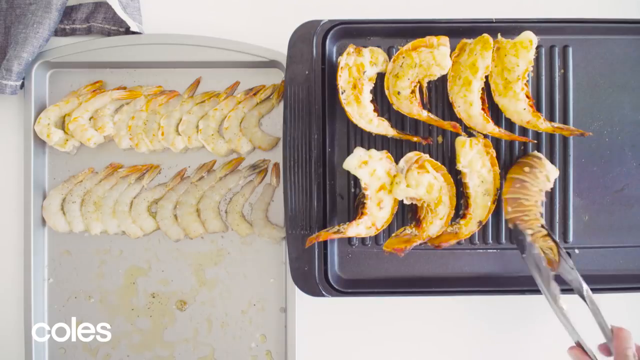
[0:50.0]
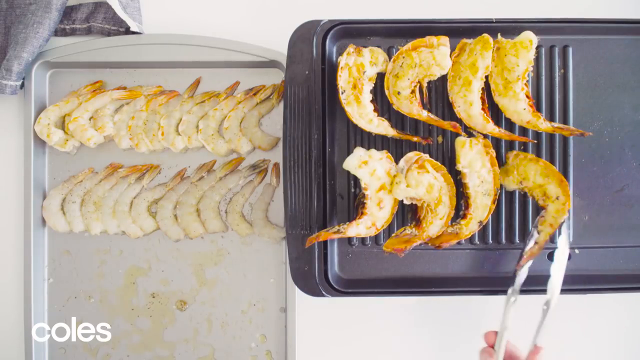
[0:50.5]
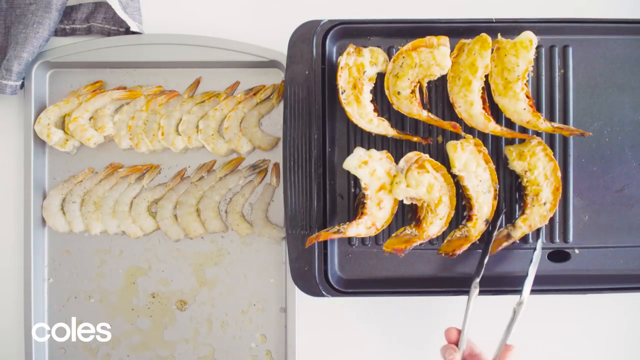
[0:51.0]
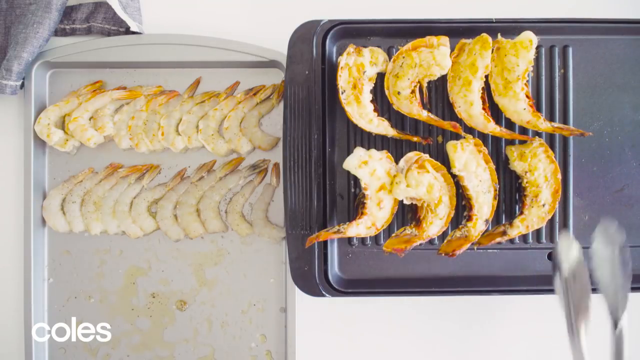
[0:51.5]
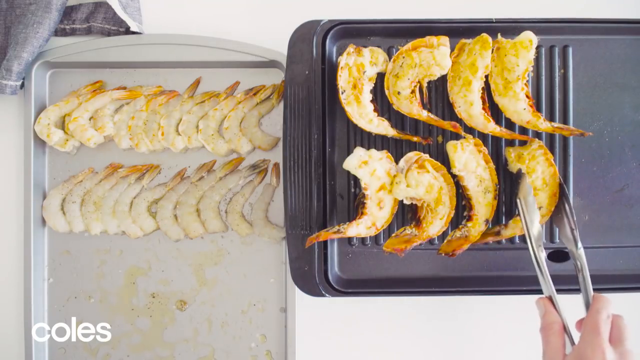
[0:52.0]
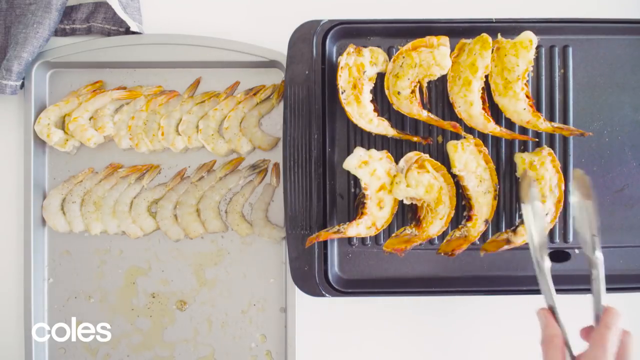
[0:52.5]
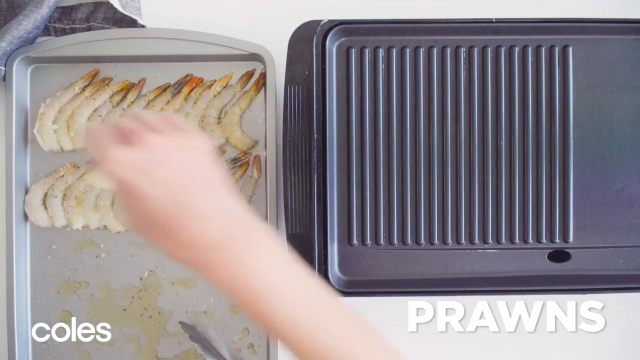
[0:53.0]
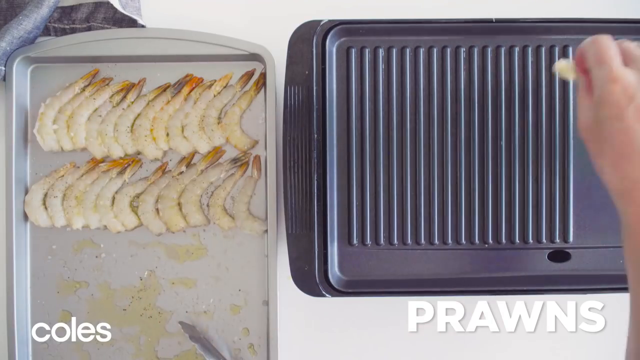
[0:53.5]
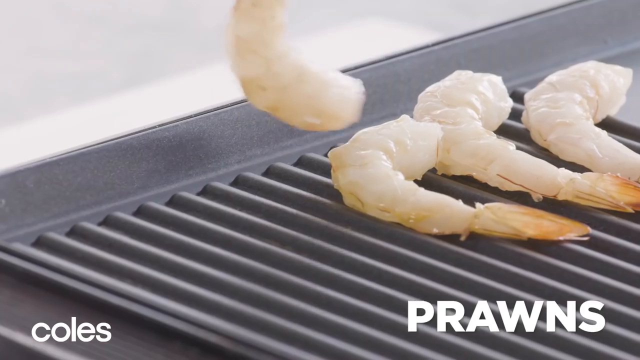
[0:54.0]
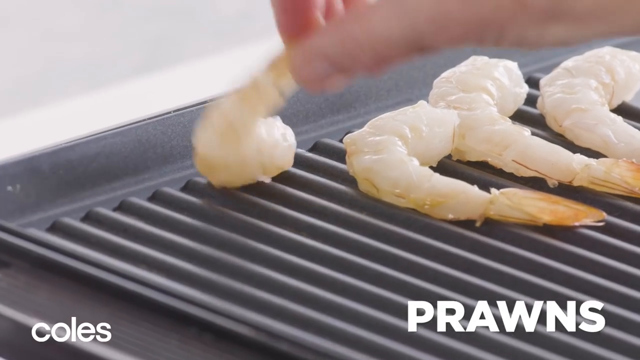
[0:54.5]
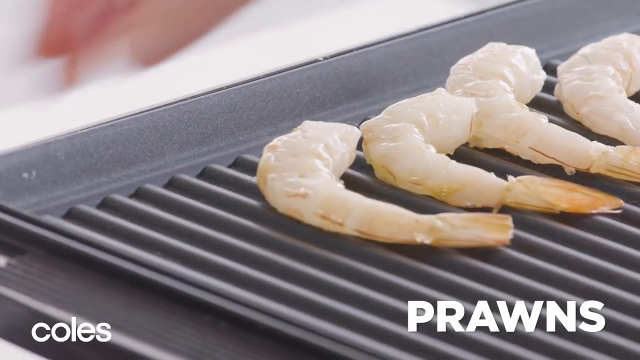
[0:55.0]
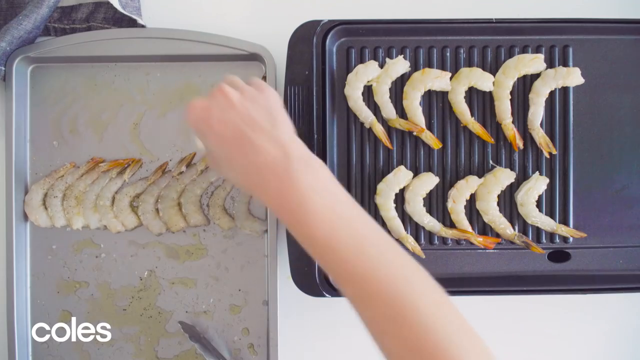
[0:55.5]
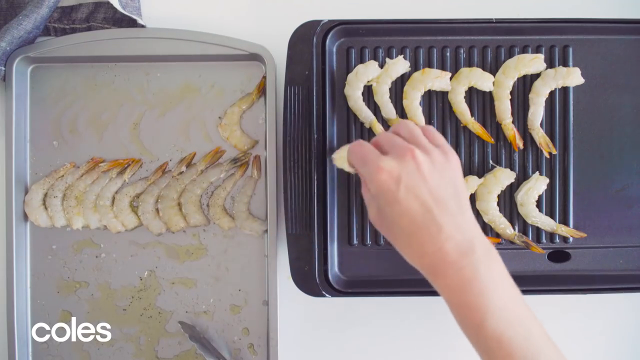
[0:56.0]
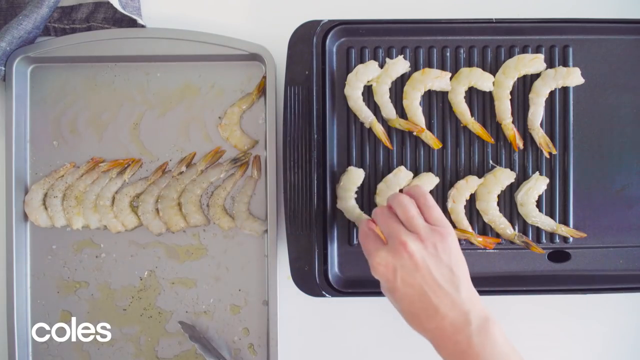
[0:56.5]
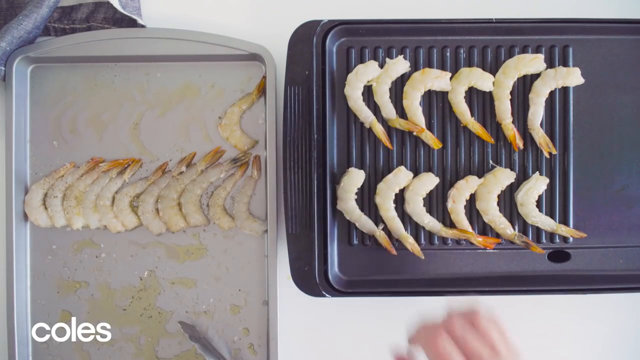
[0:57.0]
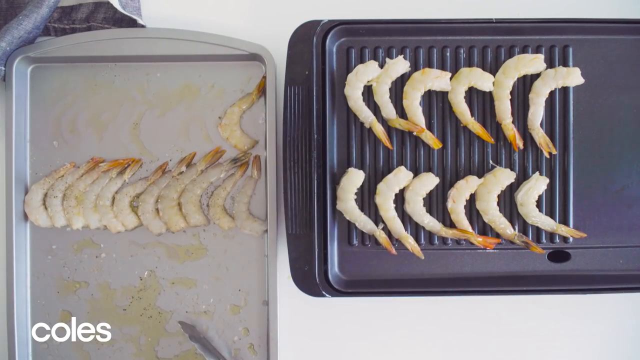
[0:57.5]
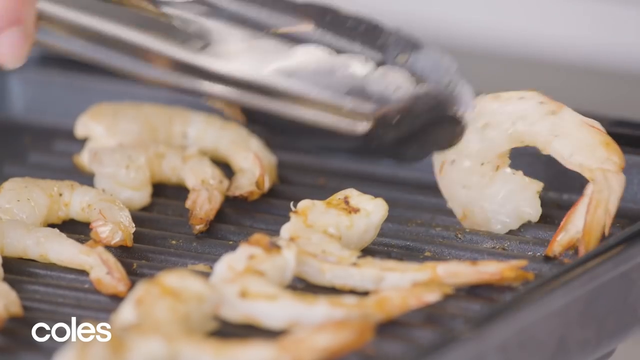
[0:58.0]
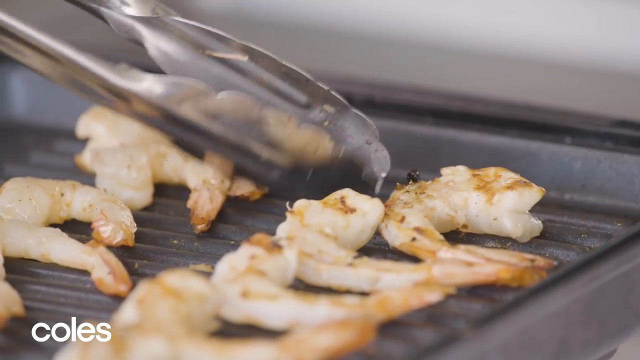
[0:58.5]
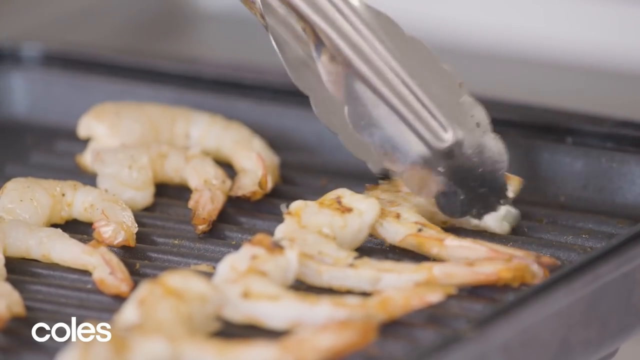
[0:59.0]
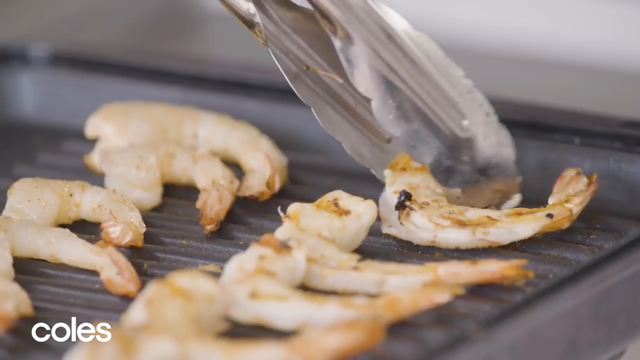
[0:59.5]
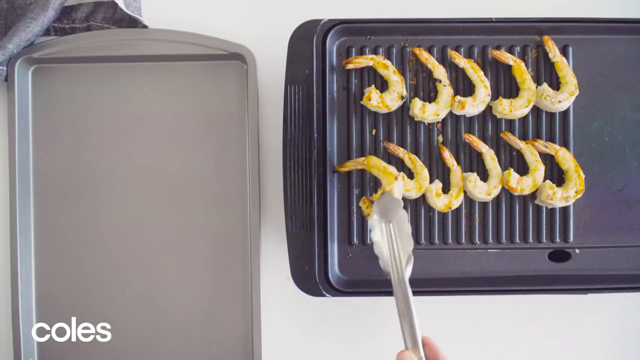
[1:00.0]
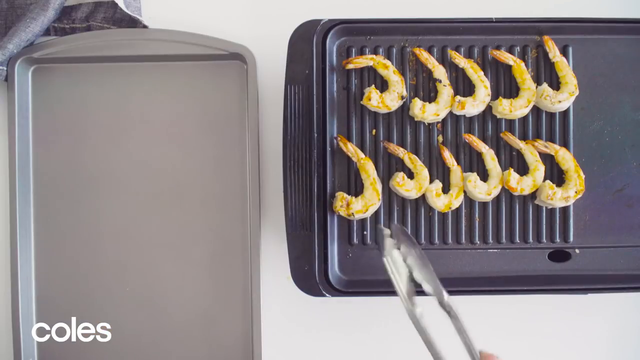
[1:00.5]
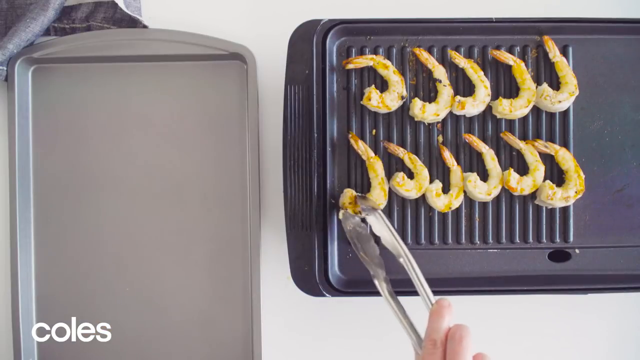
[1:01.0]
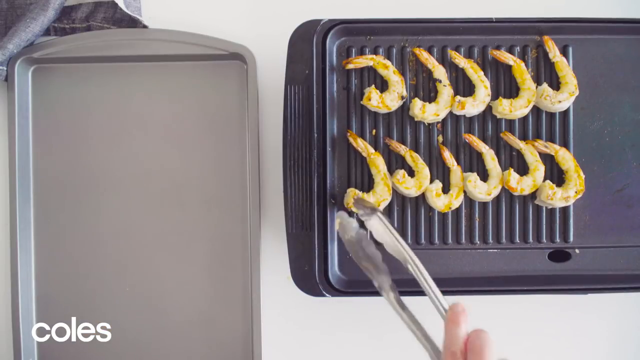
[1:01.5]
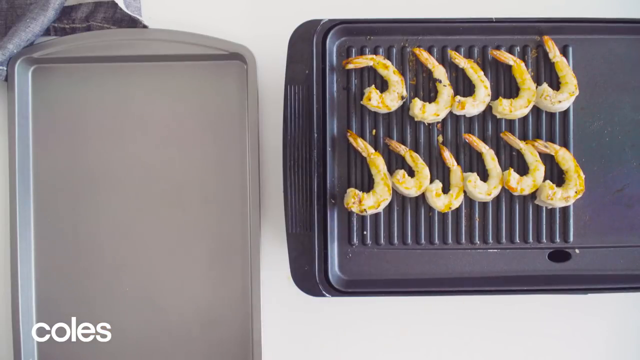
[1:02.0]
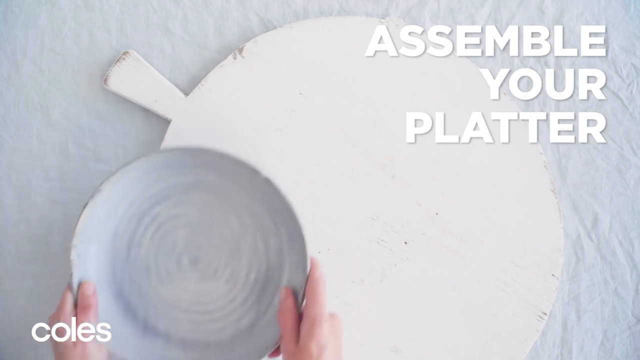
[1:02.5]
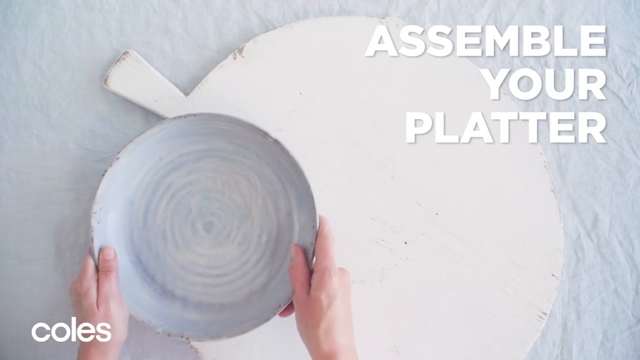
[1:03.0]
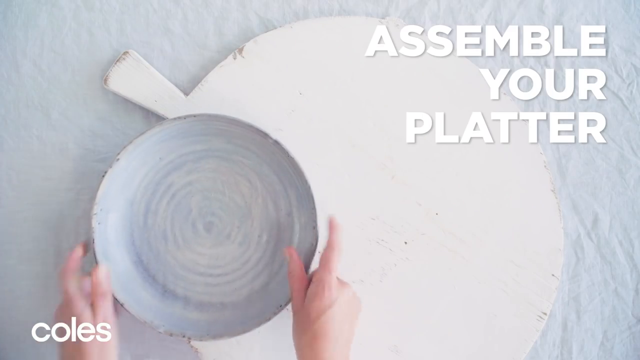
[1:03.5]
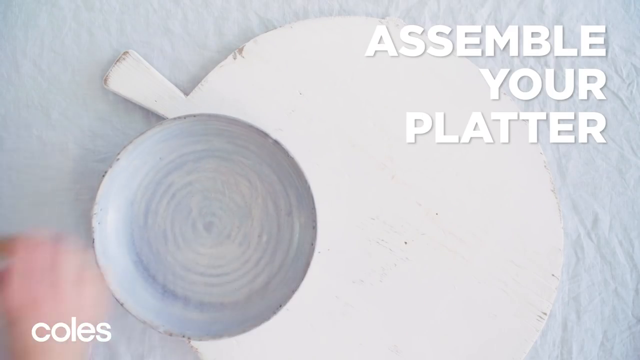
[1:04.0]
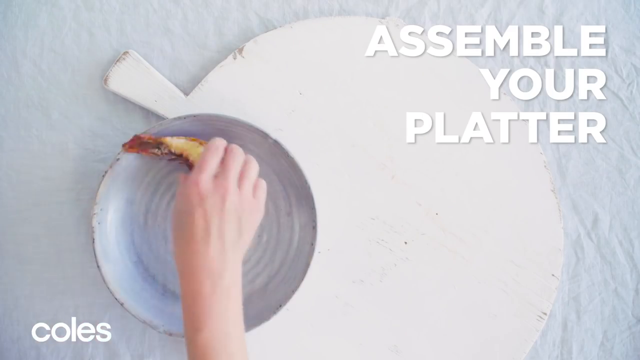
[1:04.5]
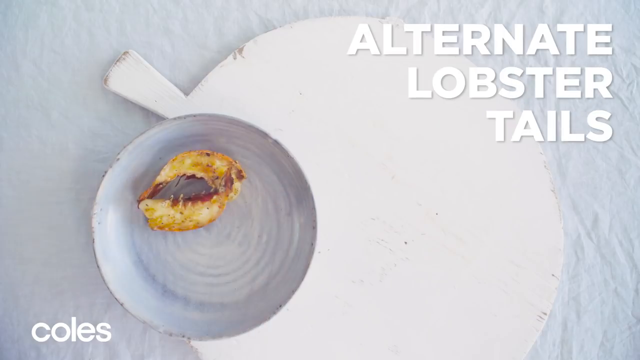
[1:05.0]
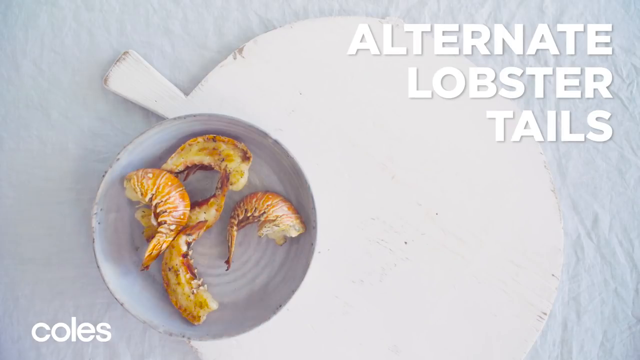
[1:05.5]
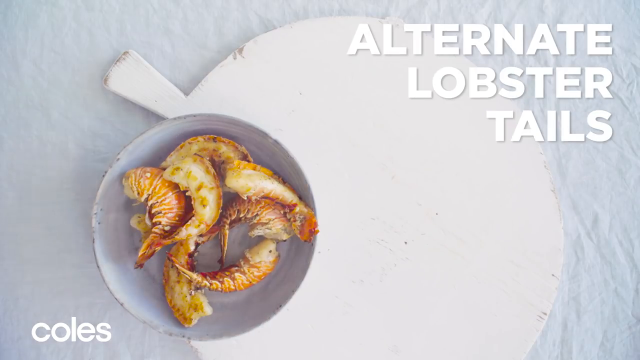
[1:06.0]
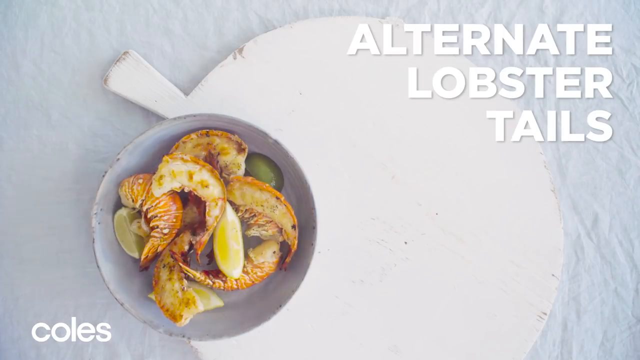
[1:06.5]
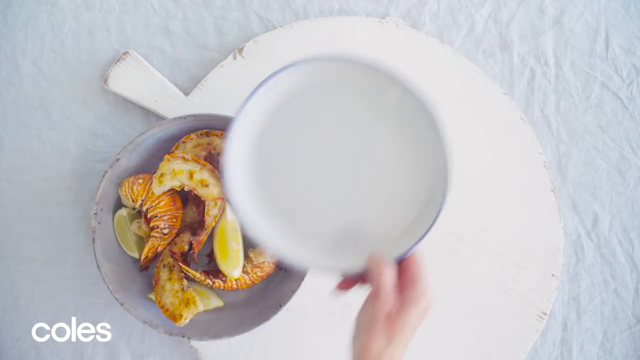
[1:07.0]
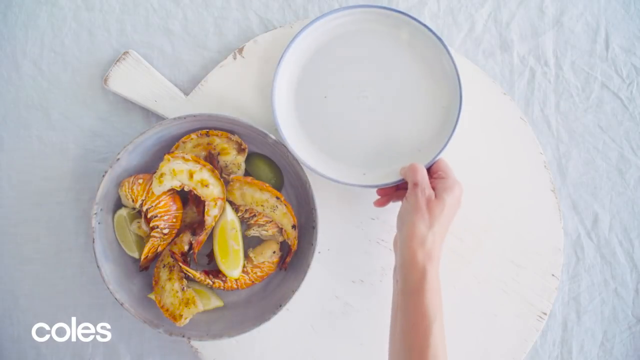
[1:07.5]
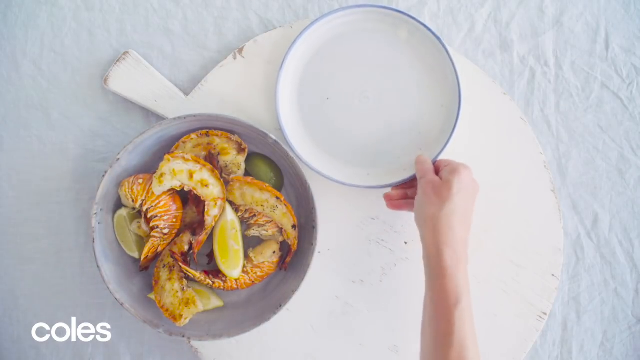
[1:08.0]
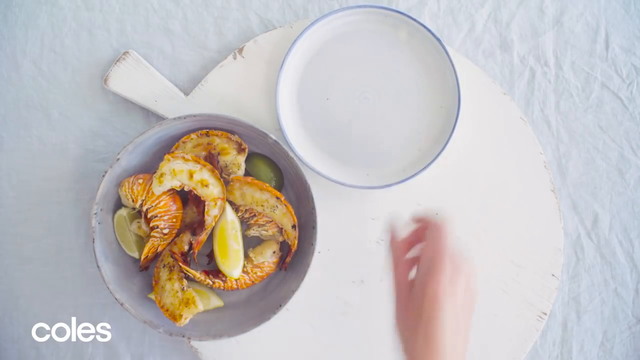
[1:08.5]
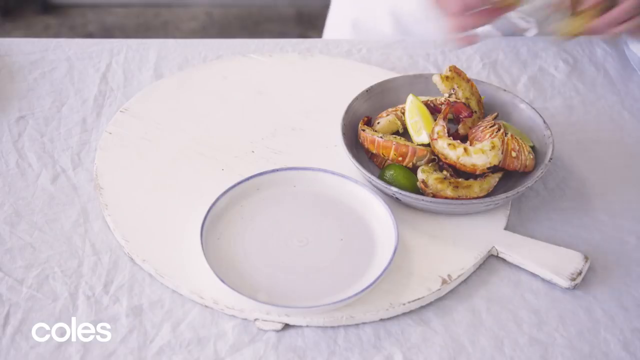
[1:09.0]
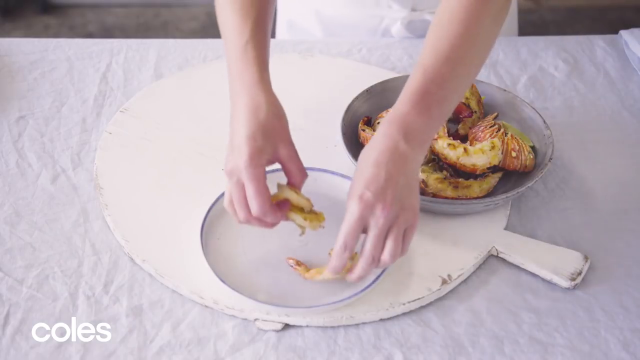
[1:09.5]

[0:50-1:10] Lobster tails continue to be put on the chargrill and flipped over with a spatula. A tray of prawns on the left is then put onto a chargrill on the right, where the prawns are grilled and flipped over with the spatula. The video transitions to "assemble your platter". From a top-down view, lobster tails are captioned as they are put into a bowl with limes and lemons. Another bowl is put down, and a different perspective shows lobster tails being put into the bowl as the platter is assembled with two bowls.